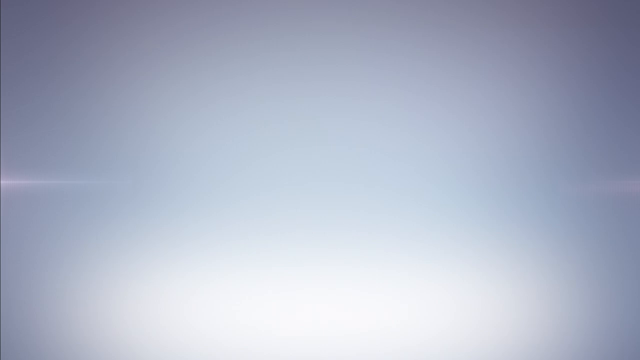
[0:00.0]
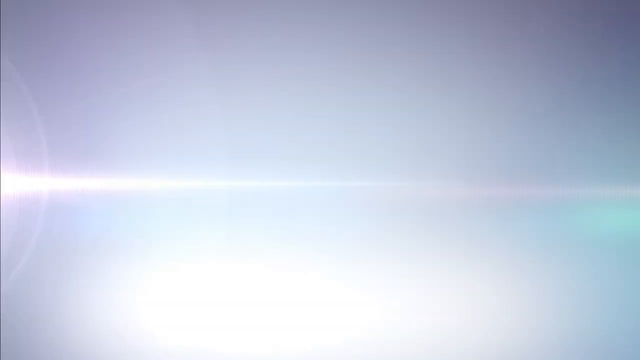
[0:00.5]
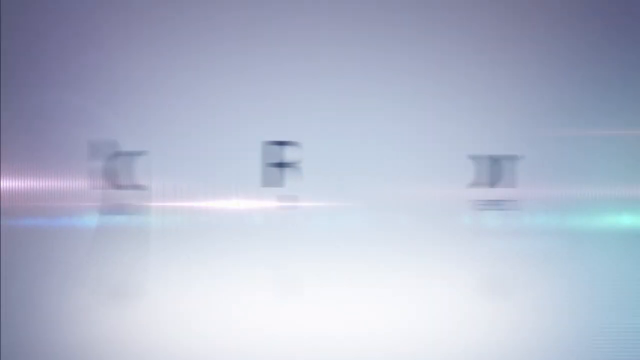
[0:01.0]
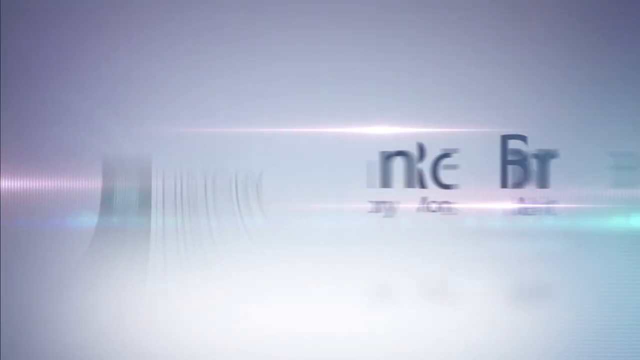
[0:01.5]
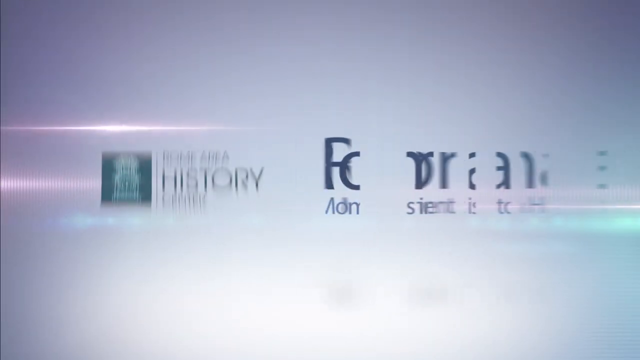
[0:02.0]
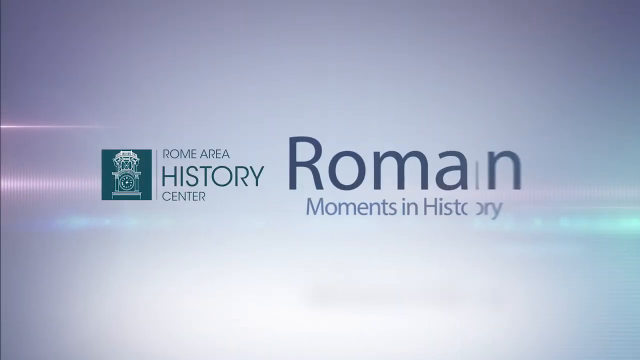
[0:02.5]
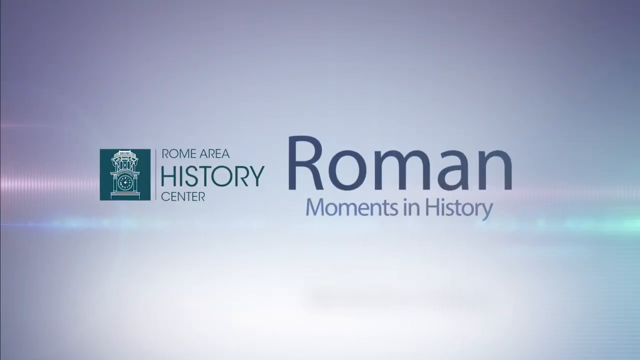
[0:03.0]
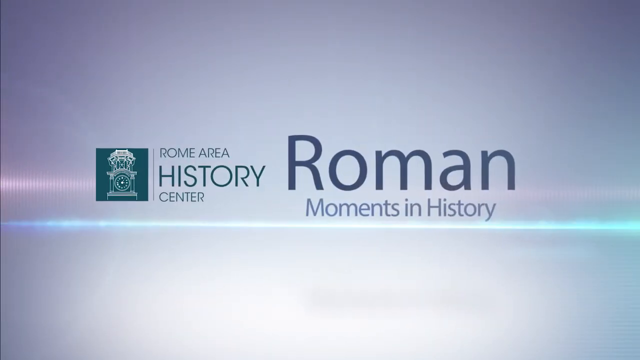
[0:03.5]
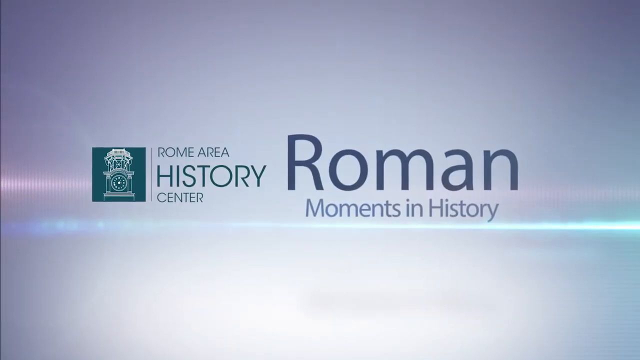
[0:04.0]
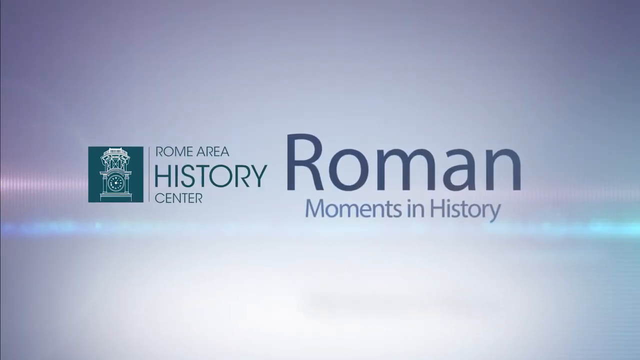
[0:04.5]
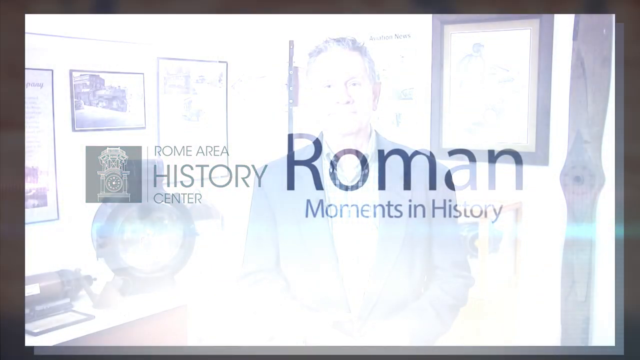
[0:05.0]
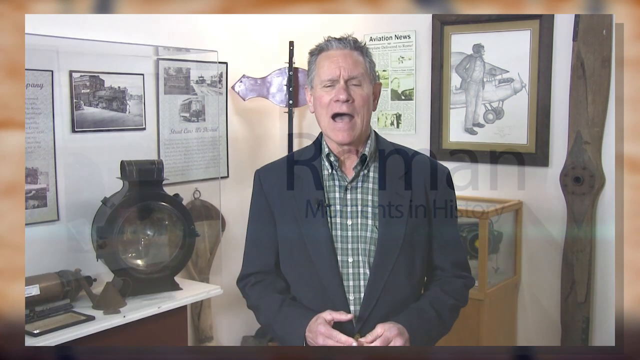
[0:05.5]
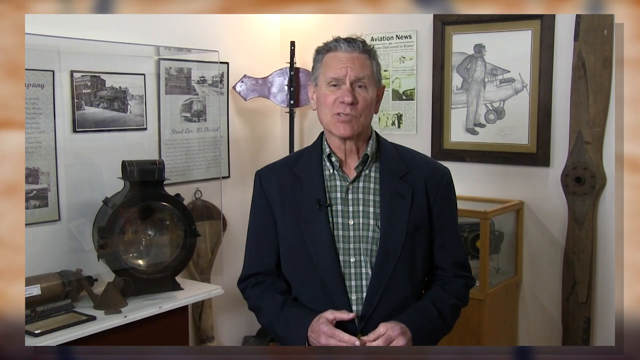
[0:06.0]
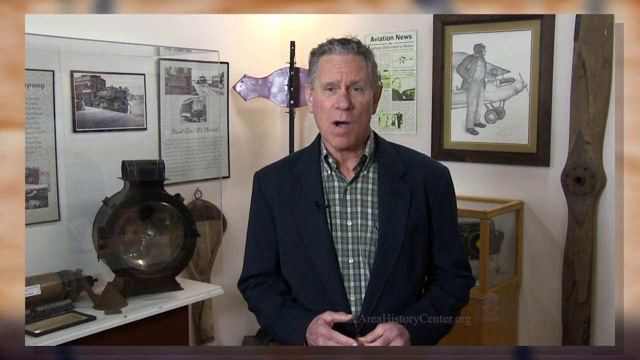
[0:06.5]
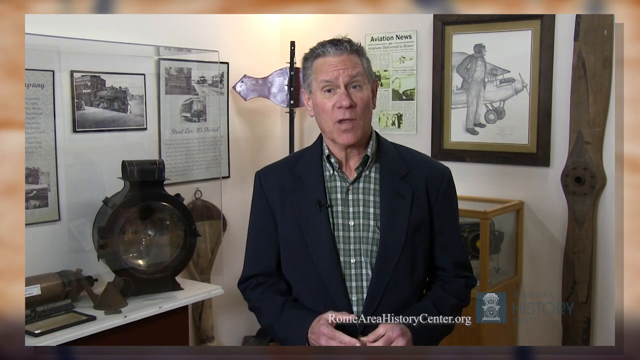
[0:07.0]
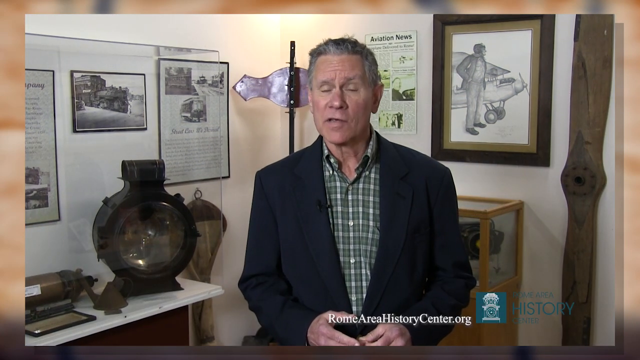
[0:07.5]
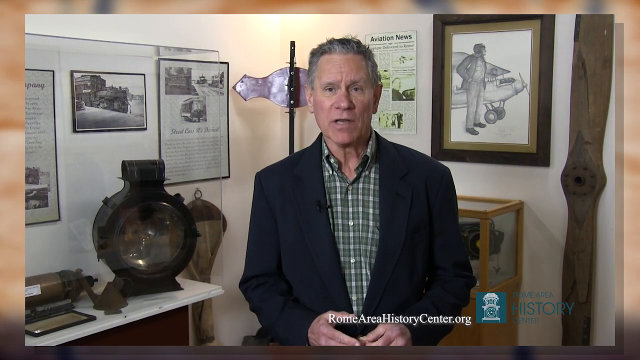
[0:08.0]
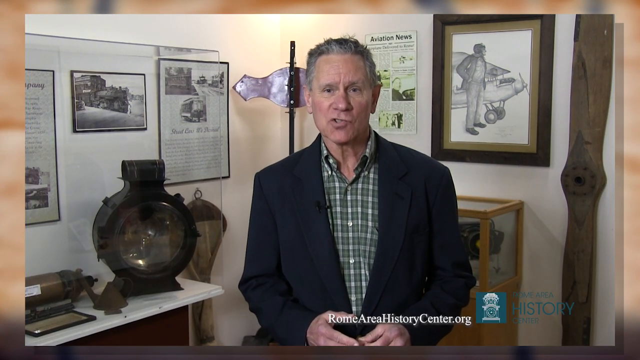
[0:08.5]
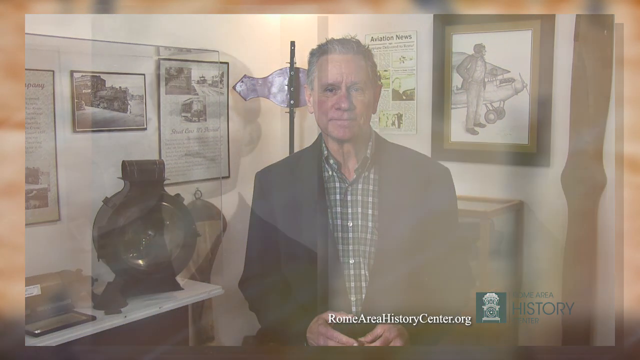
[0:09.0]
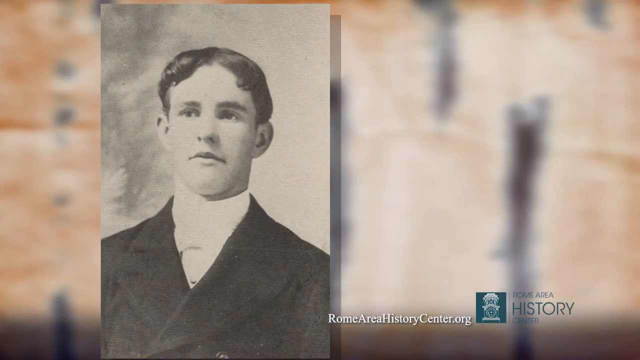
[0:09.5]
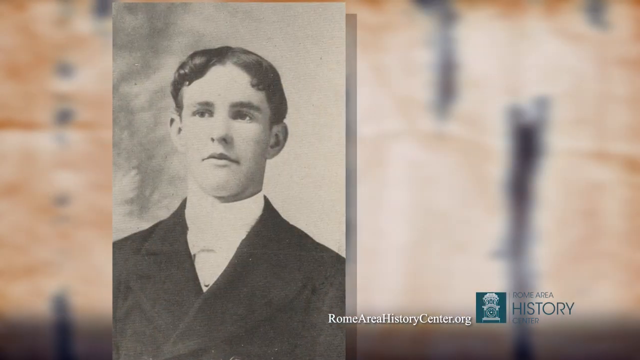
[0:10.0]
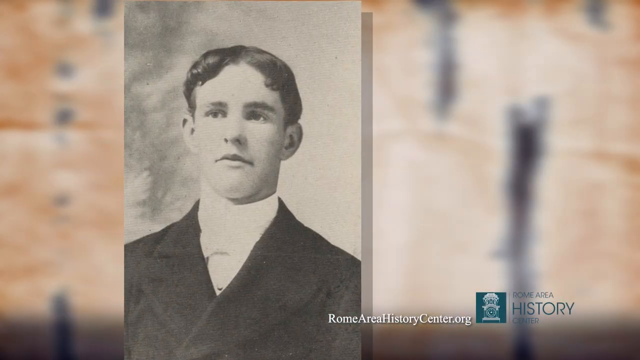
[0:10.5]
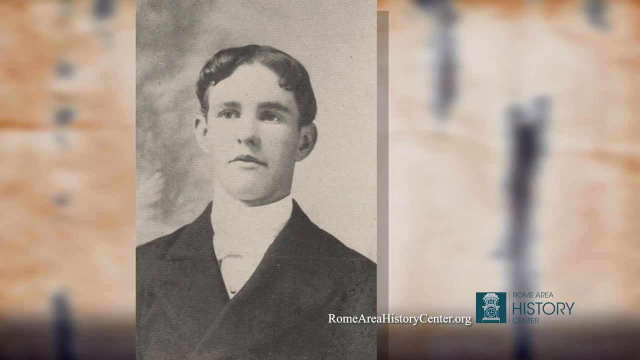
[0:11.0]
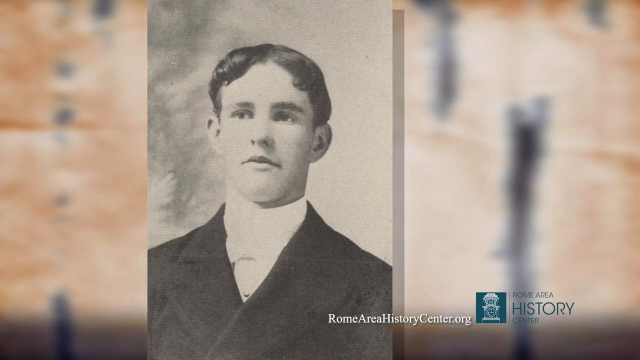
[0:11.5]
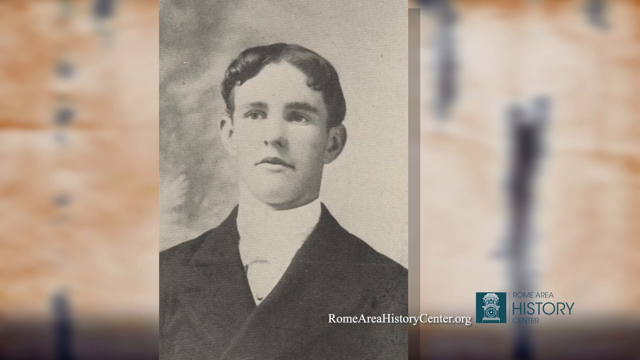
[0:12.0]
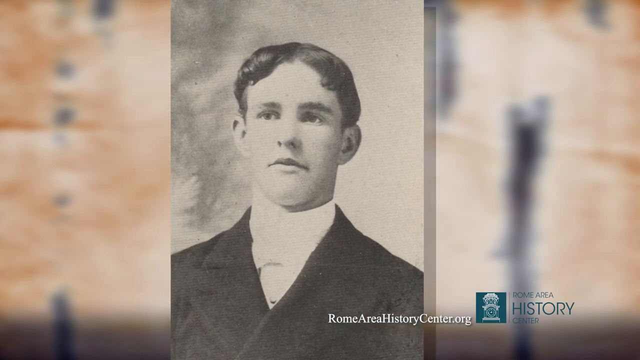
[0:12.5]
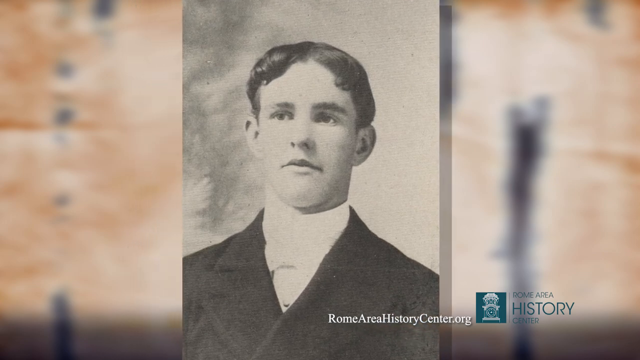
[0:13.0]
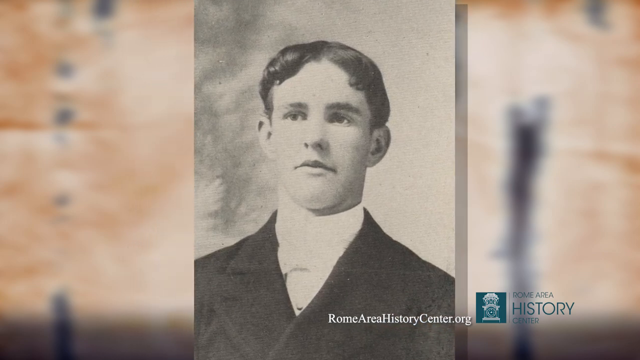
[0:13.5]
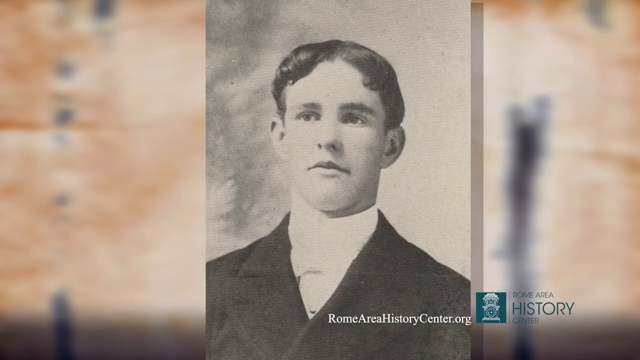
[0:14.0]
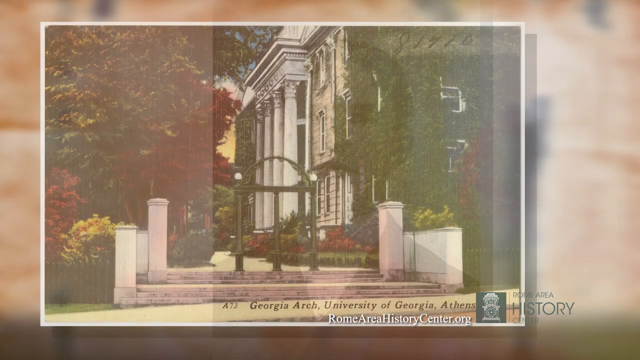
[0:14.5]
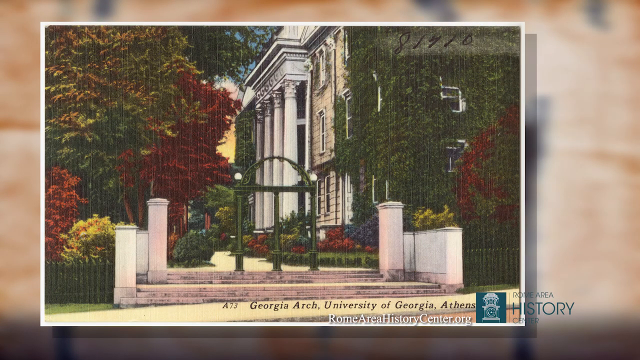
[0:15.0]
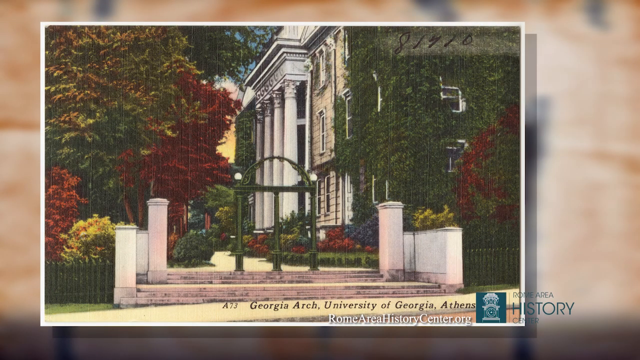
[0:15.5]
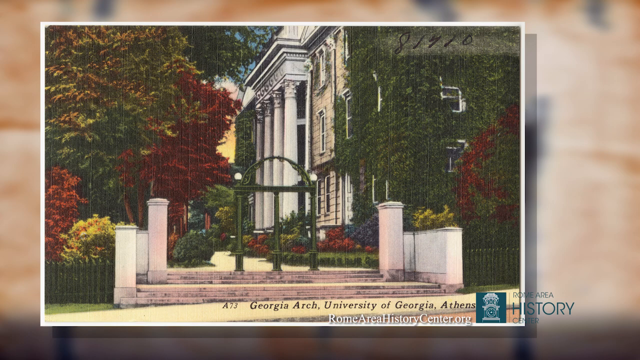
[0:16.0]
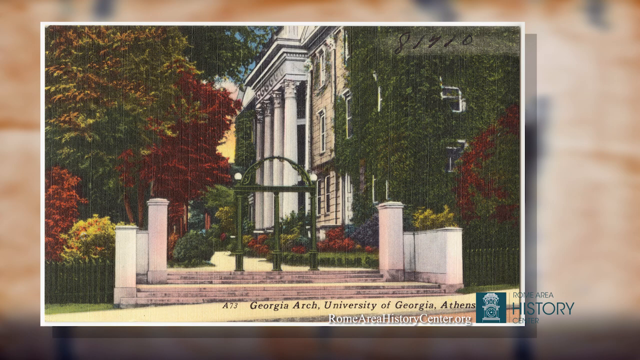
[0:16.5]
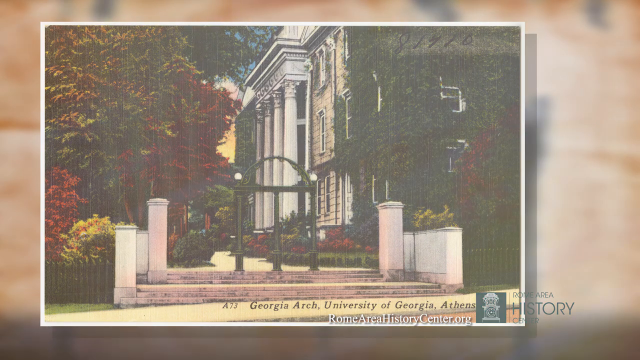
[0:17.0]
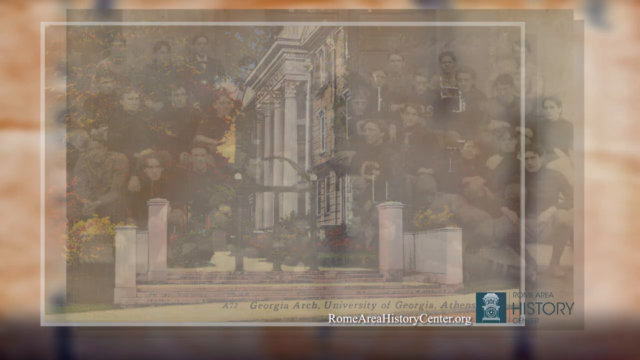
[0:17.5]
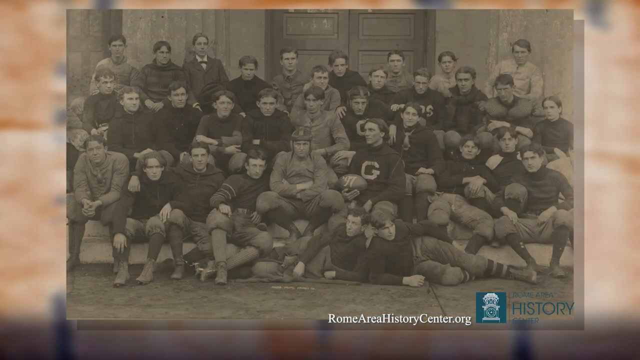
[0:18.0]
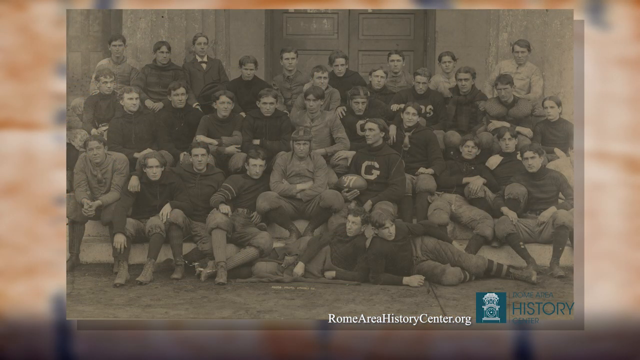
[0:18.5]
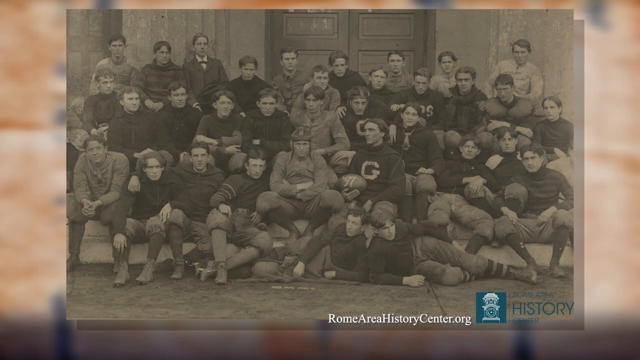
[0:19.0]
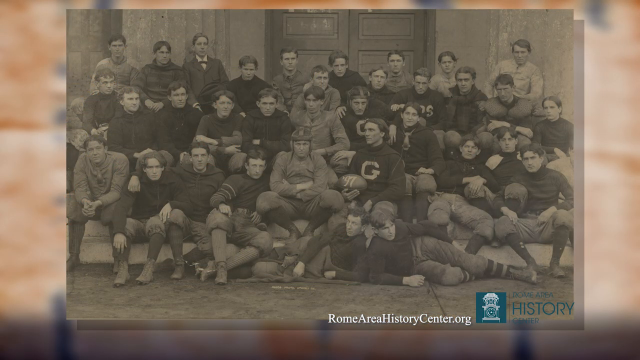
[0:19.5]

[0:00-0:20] The video opens on a presentation-style screen with glares and lights moving horizontally across the middle of the screen, and then words form that read "Rome Area History Center." To the left of the words is a green logo with what looks to be some kind of clock, though it is hard to tell. To the right of that, the words "Roman moments in history" appear in blue letters. The video then goes to a Caucasian man wearing a dark jacket over a green button shirt. He has short gray hair and wrinkles on his face and looks to be older, perhaps in his 50s. He is sitting in a room with antique pictures behind him; they are blurry and hard to make out, but some appear to have green in them, one looks like an old train, and there are newspaper clippings. Near the end of the shot, a framed picture of the nose of a plane is visible on the right side. At the bottom of the screen are the website link "RomeAreaHistoryCenter.org" and the same green logo with the clock. As he speaks, the camera cuts to a very old black-and-white picture of a man or boy wearing a black suit, with dark brown hair, who looks to be Caucasian. Next comes what looks to be a drawn, illustrated image of a university, with the source at the bottom reading "Georgia Arch University of Georgia Athens." Then a photo shows a group of men in what look like old-school rugby outfits, sitting together for a team picture.